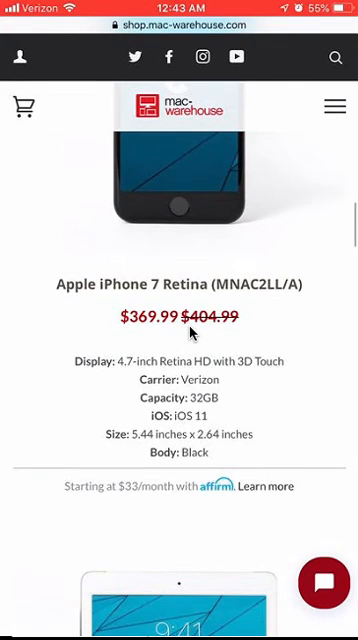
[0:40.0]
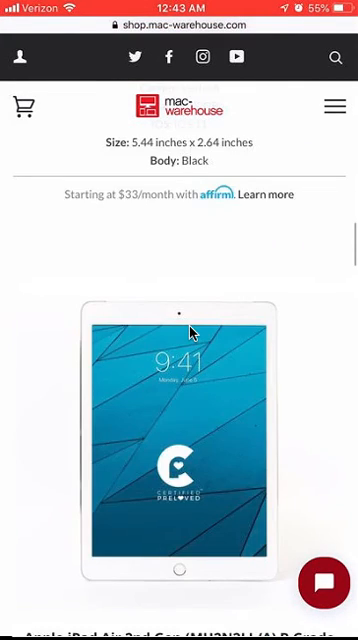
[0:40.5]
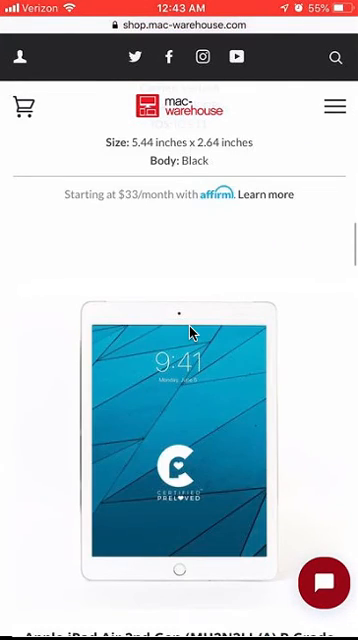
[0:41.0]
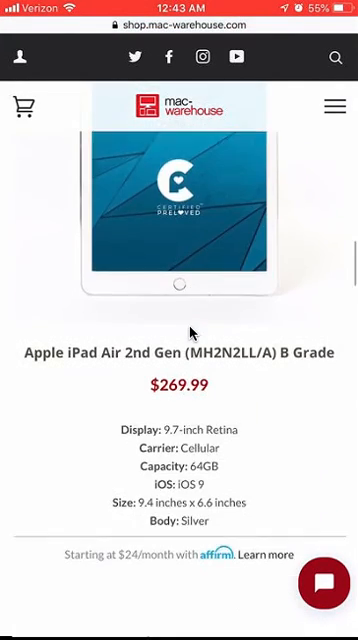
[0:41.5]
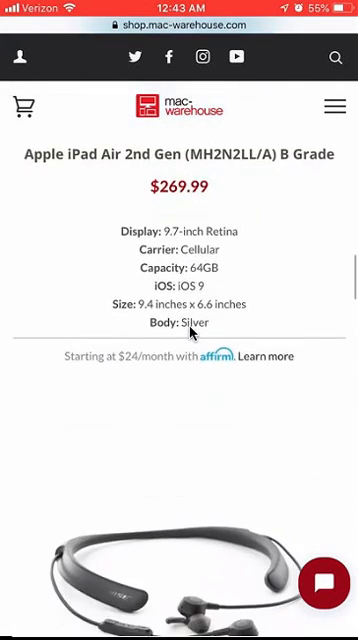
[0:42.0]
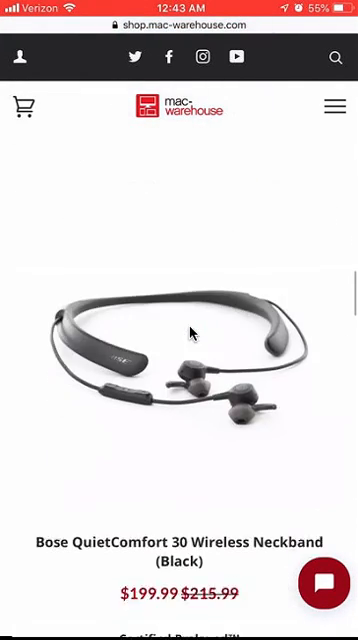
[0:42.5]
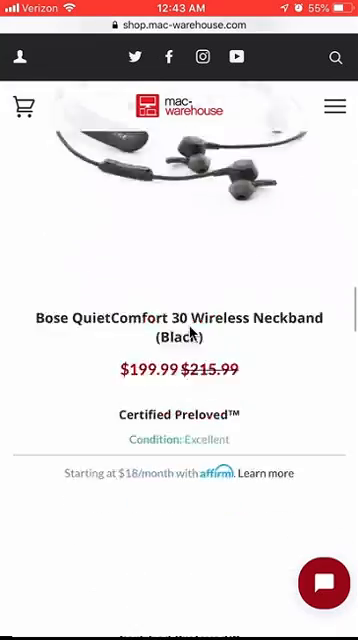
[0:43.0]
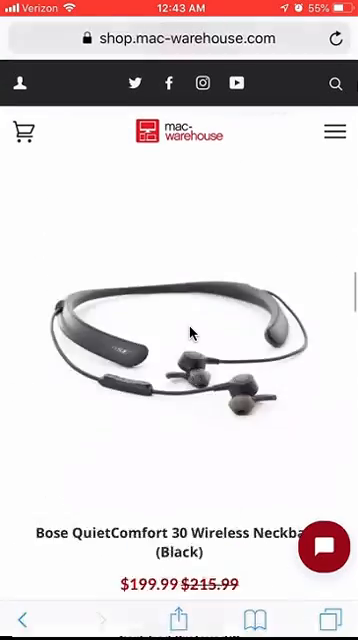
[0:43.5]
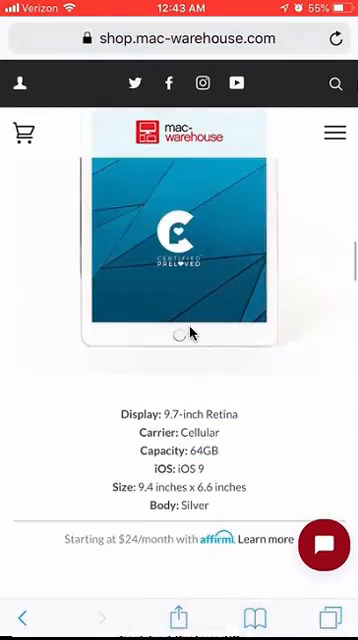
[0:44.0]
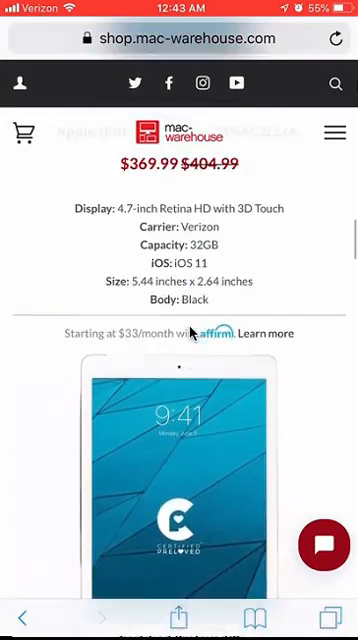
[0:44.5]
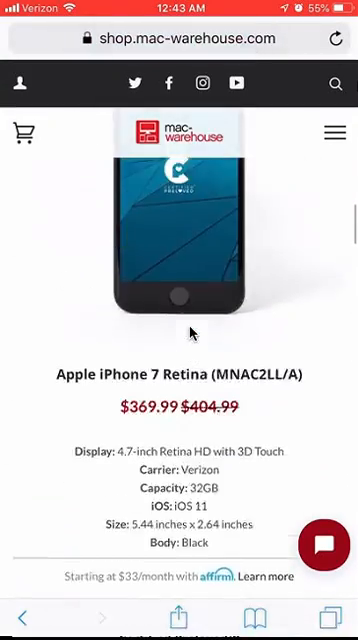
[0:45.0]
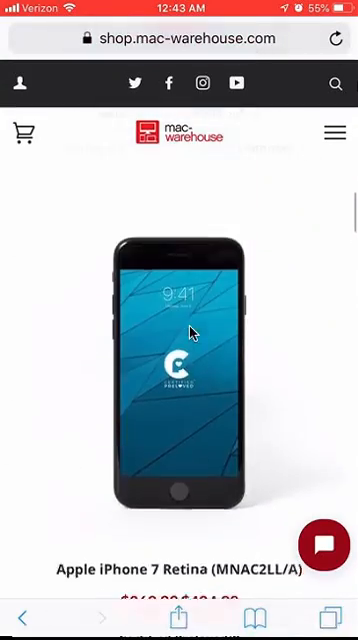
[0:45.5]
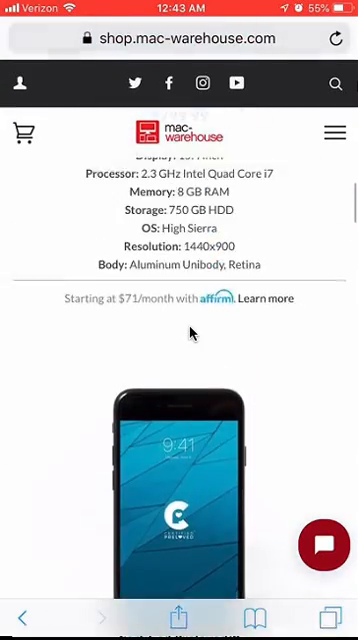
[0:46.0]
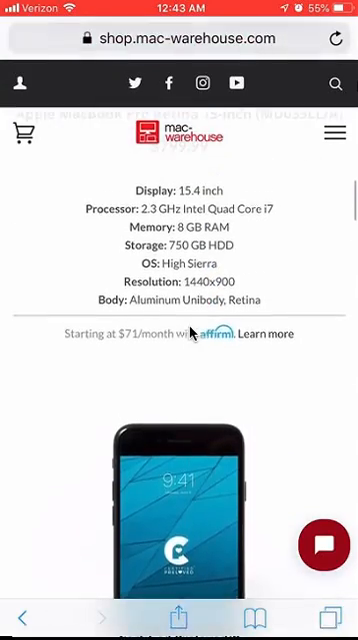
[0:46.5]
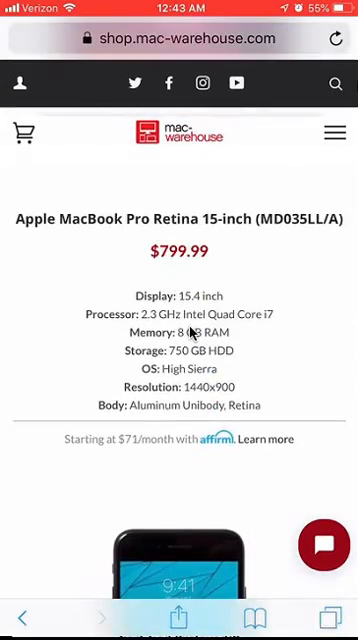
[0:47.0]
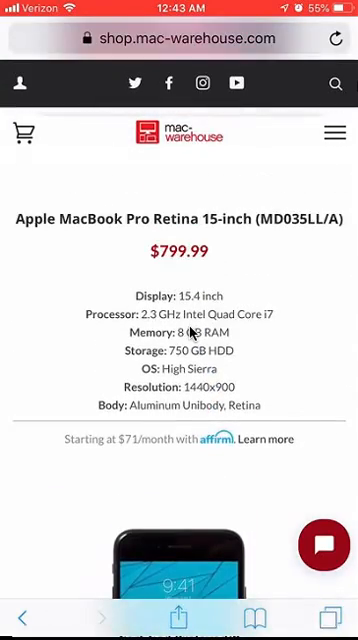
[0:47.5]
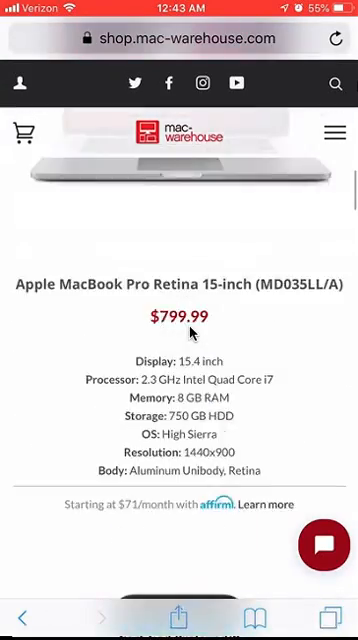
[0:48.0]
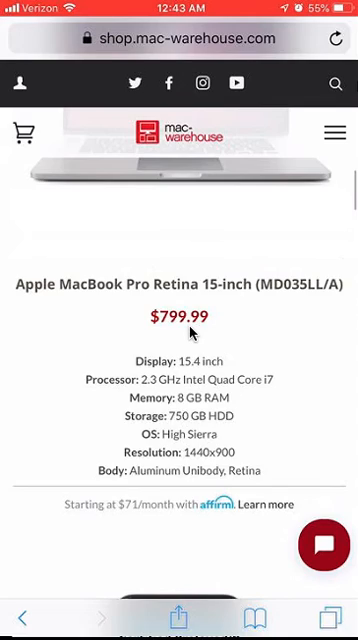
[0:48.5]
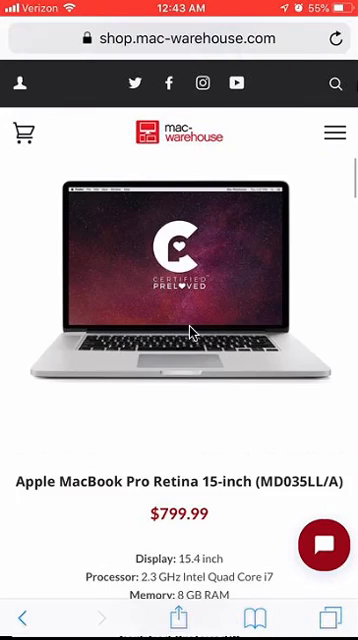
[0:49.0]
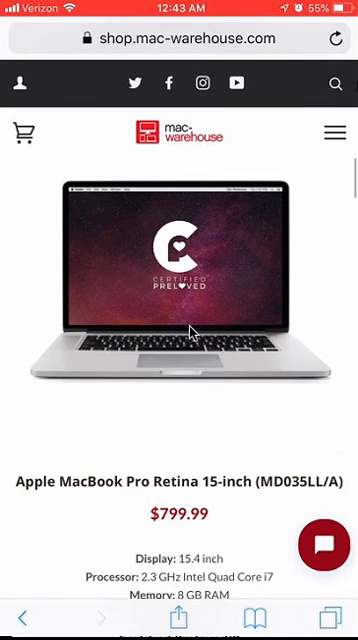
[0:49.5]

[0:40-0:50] On a phone, the user is on the OneShopMacWarehouse.com website, scrolling through possible items to buy. One item is an Apple iPad Air second generation, currently priced at $269.99. Scrolling down, the user looks at QuietComfort 30 wireless neck bands in black, currently priced at $199.99 after a price reduction from $250.99. The user then scrolls back up and focuses on the Apple MacBook Pro Retina 15-inch, currently priced at $799.99, and stops there.